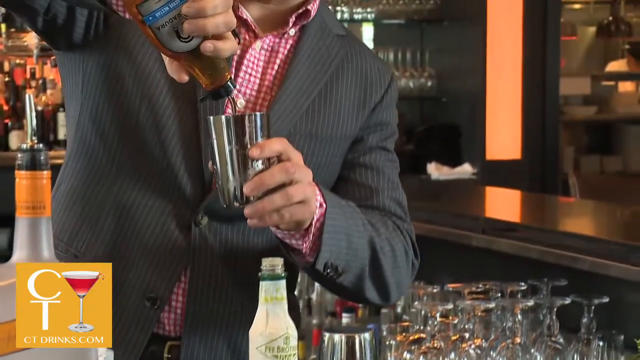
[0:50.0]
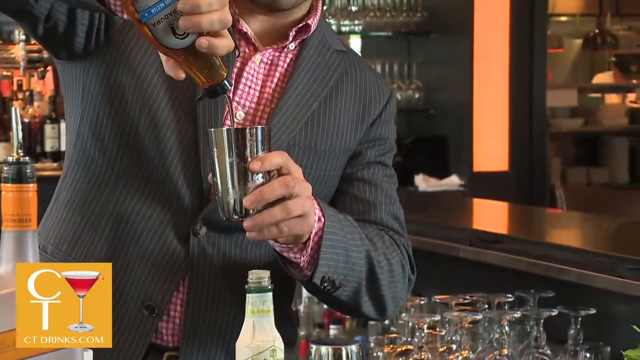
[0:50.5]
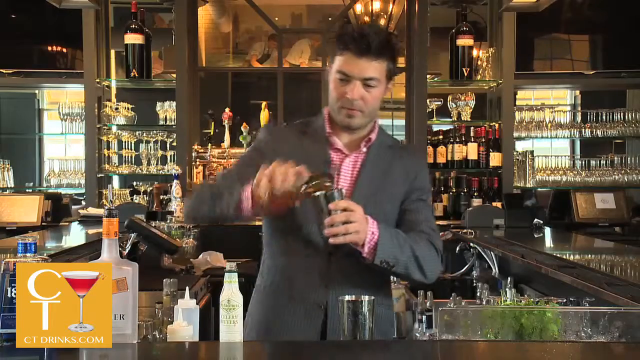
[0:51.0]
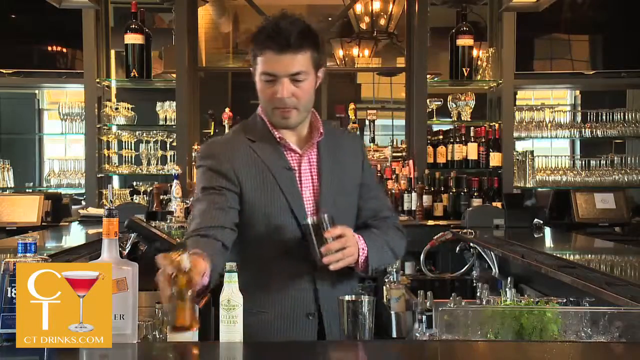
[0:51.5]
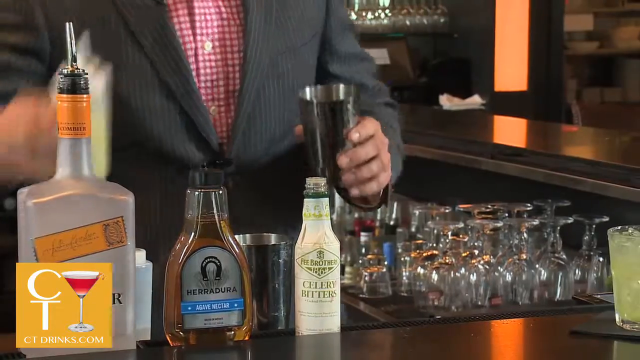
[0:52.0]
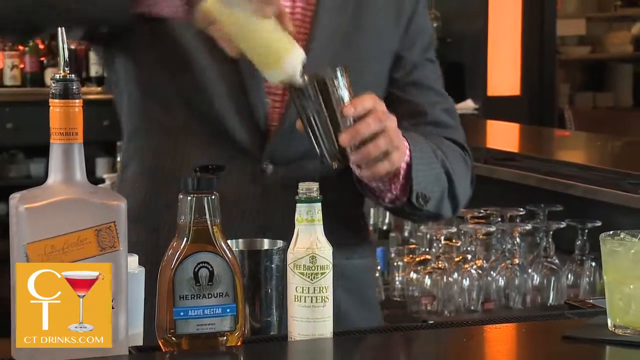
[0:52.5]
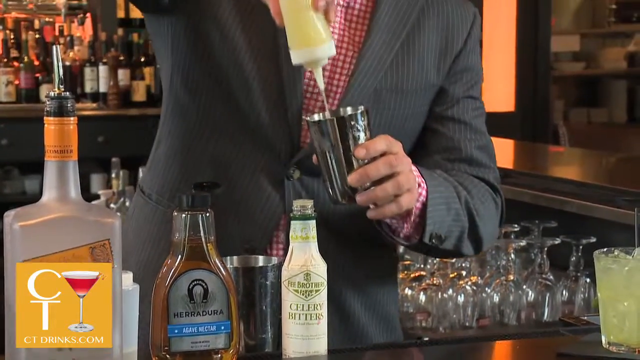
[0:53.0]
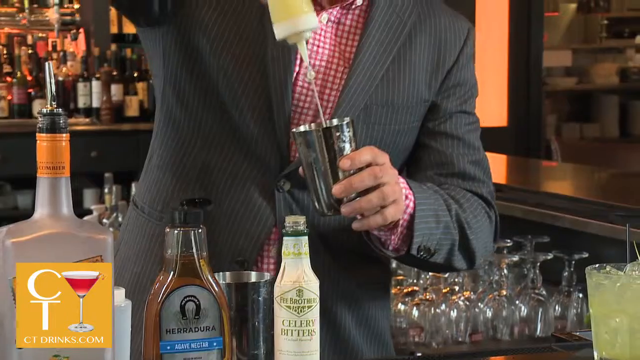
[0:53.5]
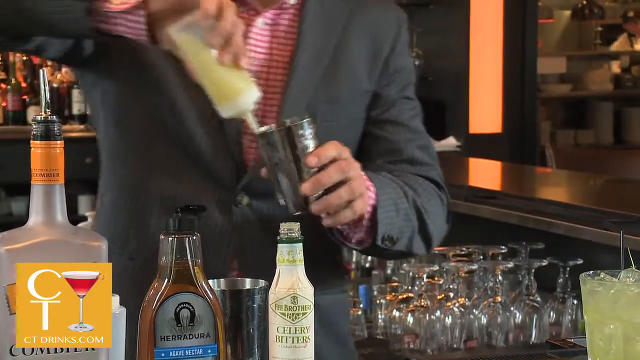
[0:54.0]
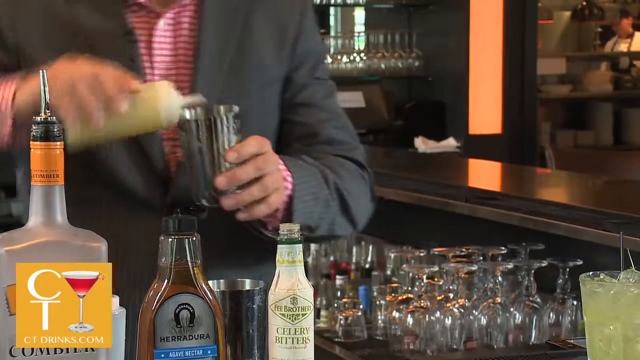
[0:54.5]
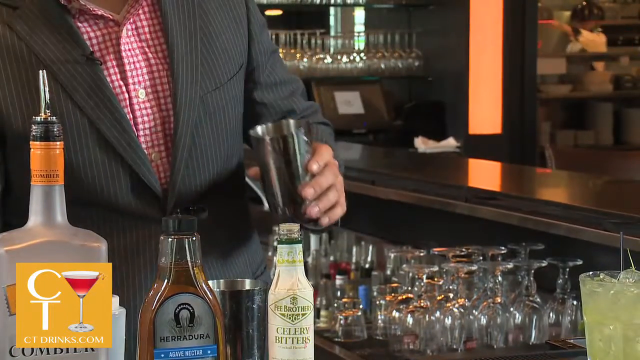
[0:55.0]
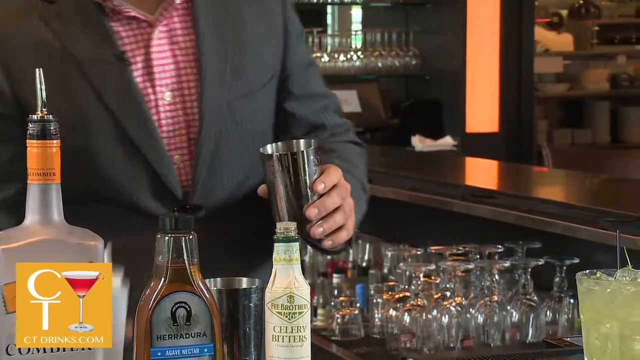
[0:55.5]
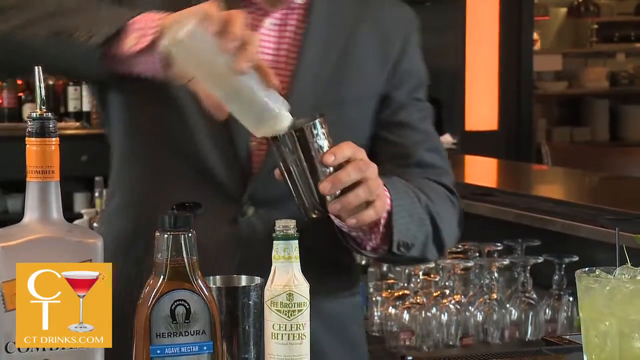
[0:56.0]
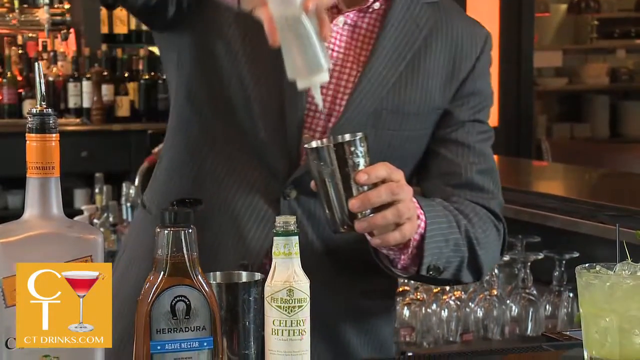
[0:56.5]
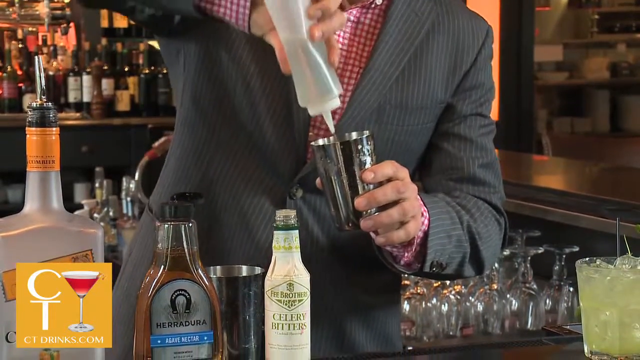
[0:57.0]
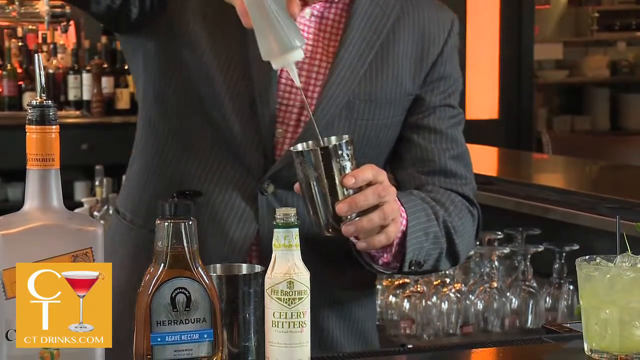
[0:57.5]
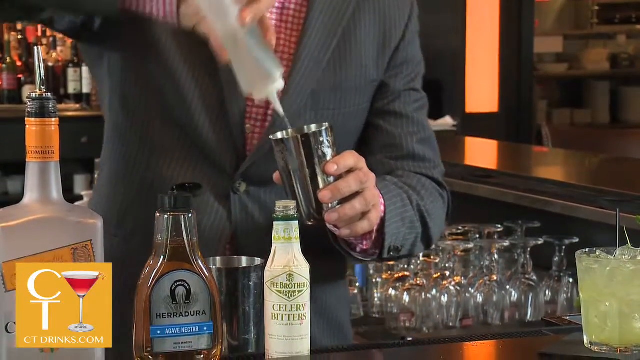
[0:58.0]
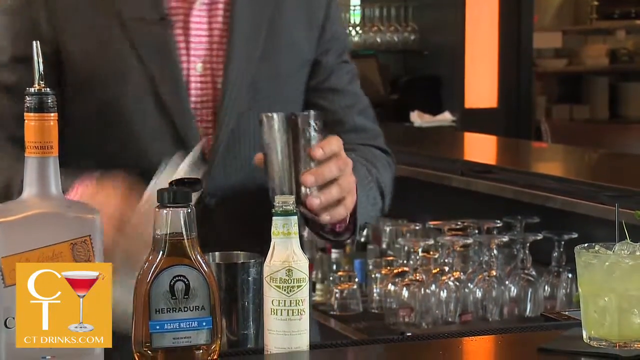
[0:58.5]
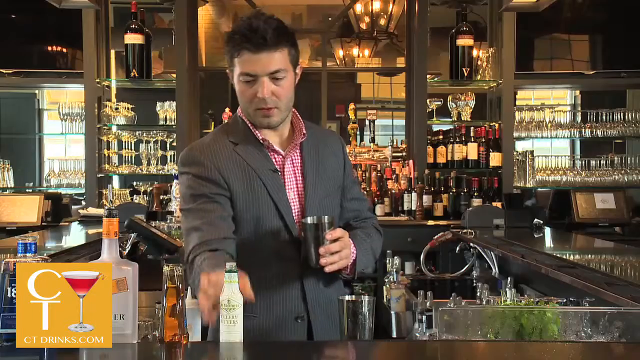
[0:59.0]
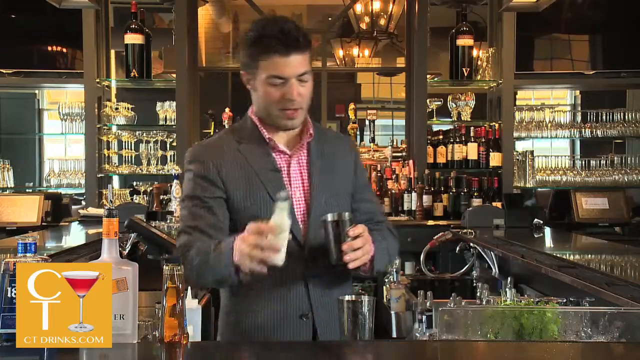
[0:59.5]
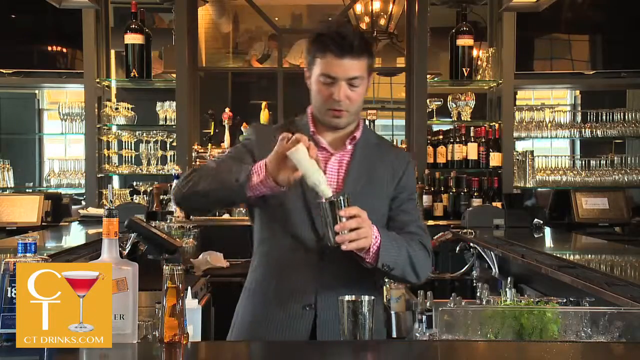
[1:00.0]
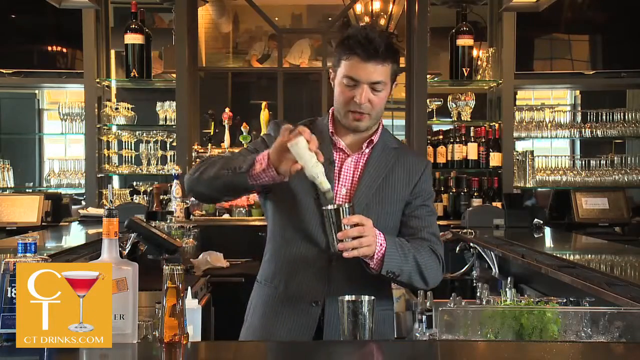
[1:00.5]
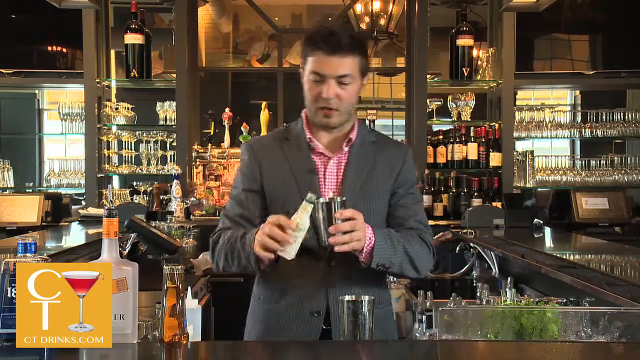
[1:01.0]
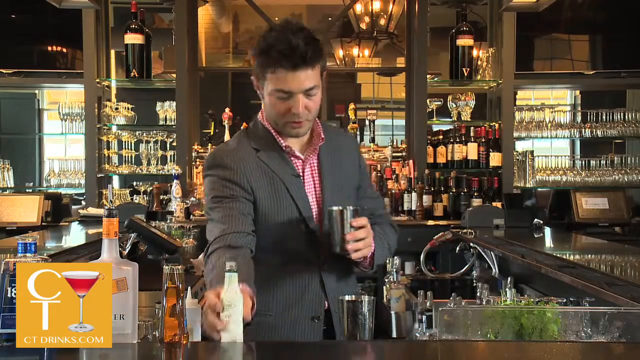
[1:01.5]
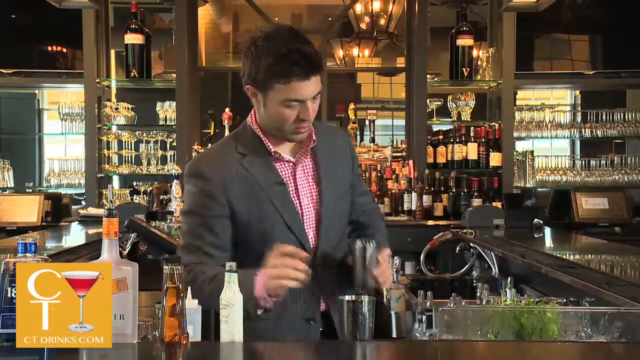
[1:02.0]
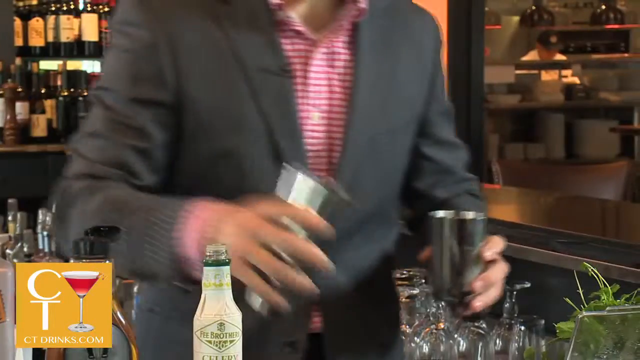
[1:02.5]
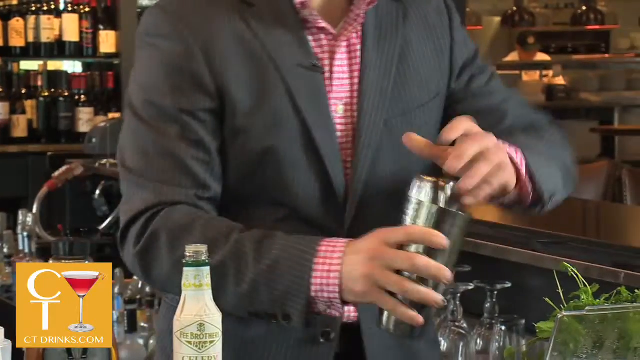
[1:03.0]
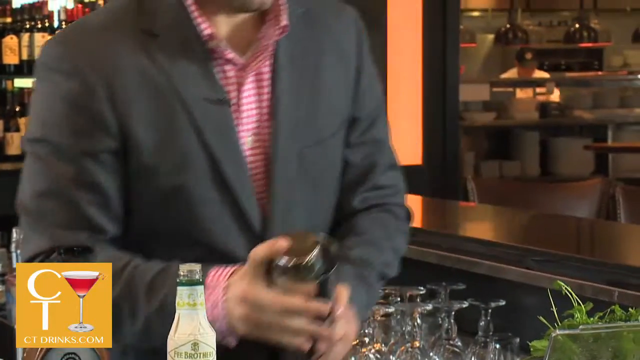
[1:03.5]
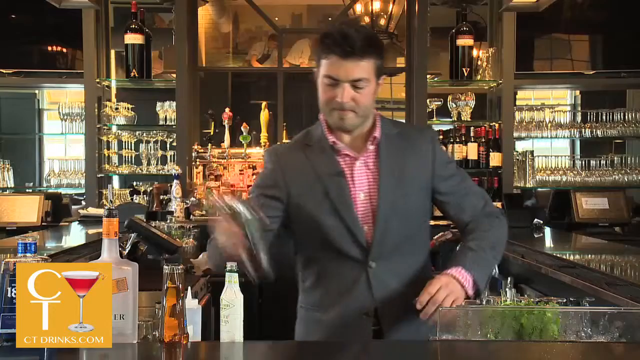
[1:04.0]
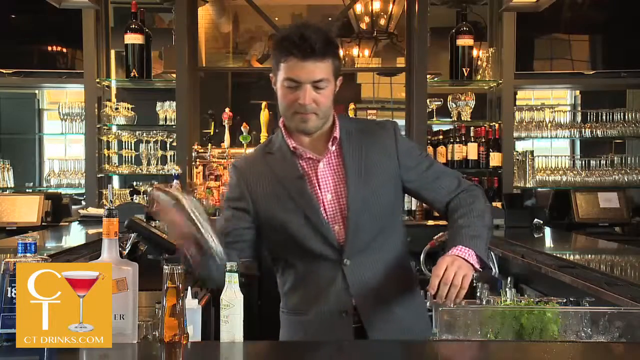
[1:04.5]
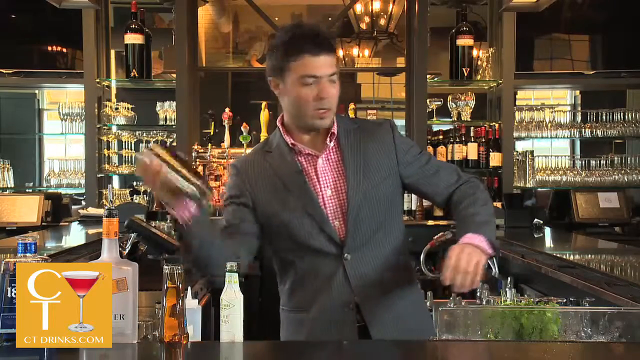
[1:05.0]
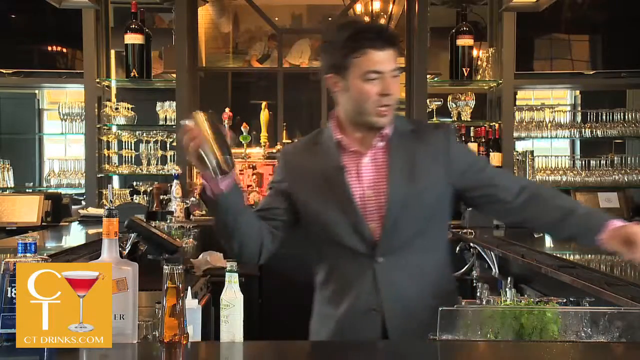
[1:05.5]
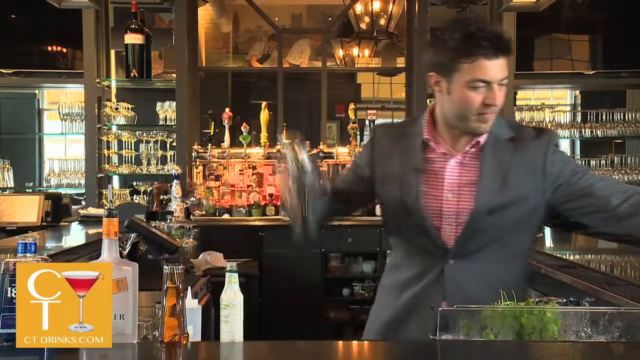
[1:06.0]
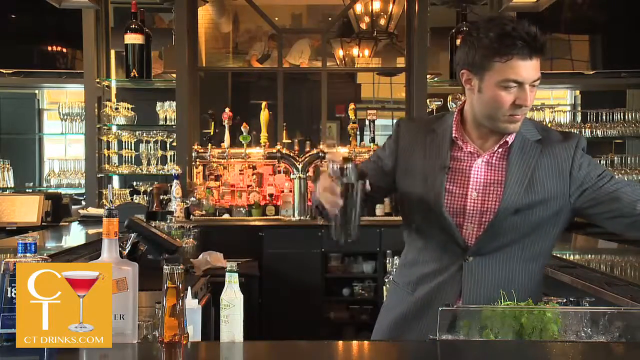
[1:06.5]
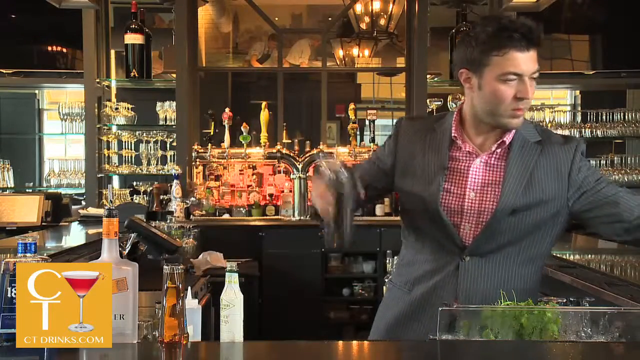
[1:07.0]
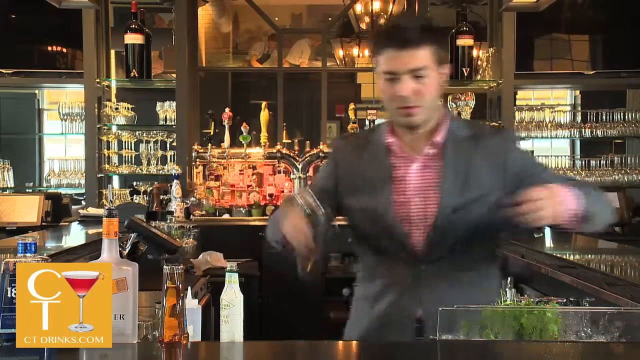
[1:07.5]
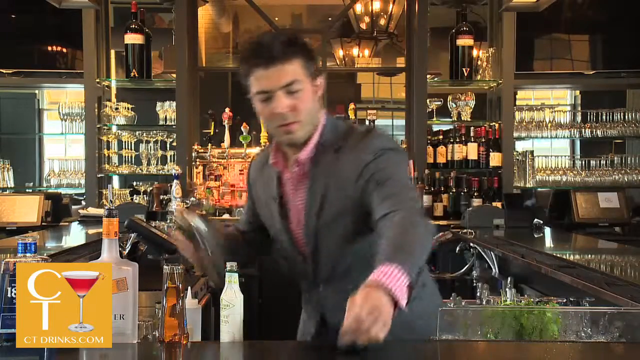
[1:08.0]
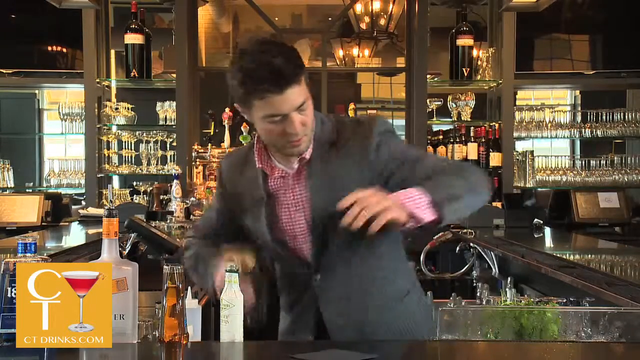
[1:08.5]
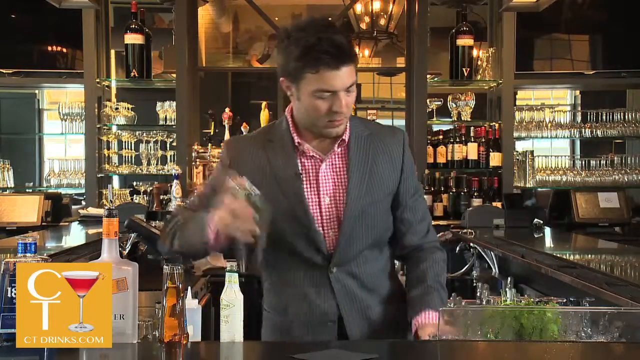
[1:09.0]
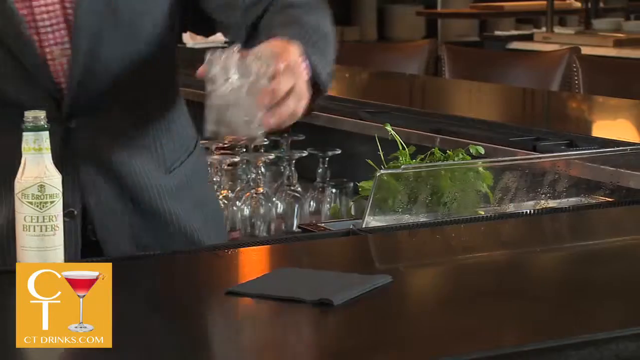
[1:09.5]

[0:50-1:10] A man continues preparing a drink behind a bar. He holds a metal shaker cup in one hand and squeezes some agave nectar into it. He puts the bottle down on the bar, picks up another squeeze bottle with yellow liquid in it and squeezes that in, then squeezes yet another squeeze bottle into it. He picks up a bottle that says "celery bitters" and shakes some of that in. He then puts the small metal cup into a larger metal shaker cup and begins shaking it with his right hand. He picks up a glass with ice in it and puts it on the counter in front of him. He wears a gray pinstripe jacket and a red and white checked shirt. He is standing in front of a very ornate bar with a mirrored backdrop and glass shelves on either side holding rows of drink glasses and bottles of liquor. Counters in front of him and on both sides have liquor bottles and some drink glasses. On the right side of the screen, plates are stacked up as if it is a kitchen. Windows across from him are reflected in the mirror behind him, and a large light fixture hangs just above him.